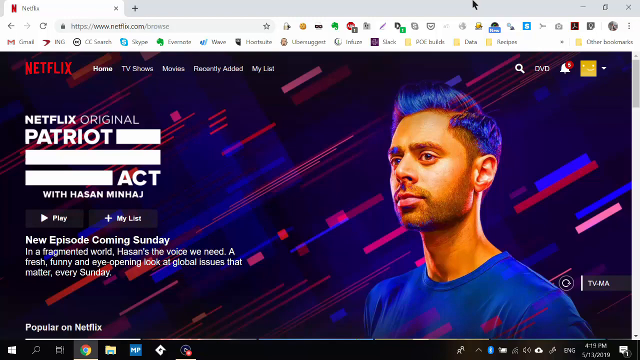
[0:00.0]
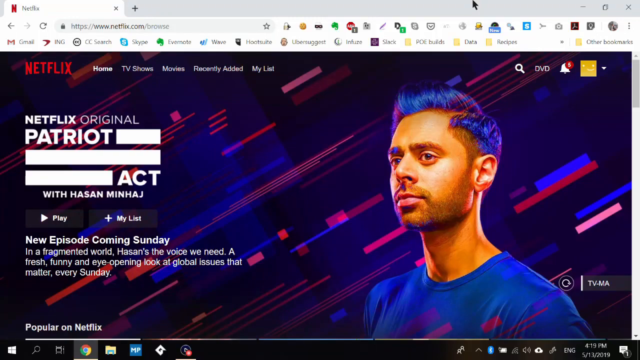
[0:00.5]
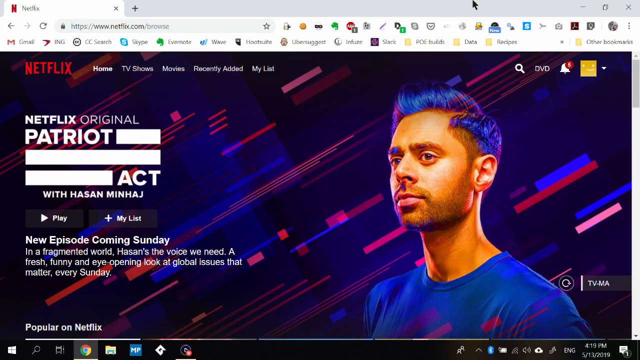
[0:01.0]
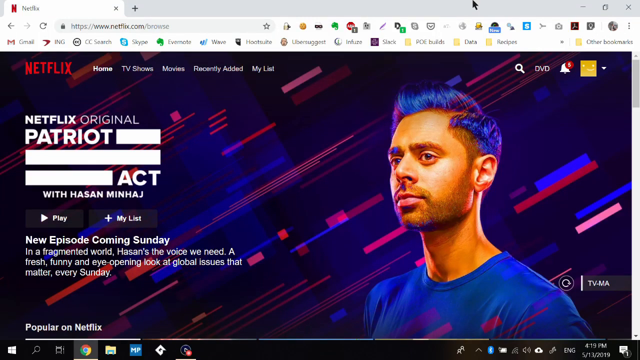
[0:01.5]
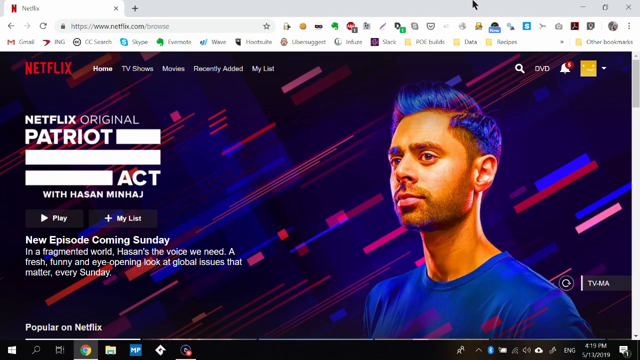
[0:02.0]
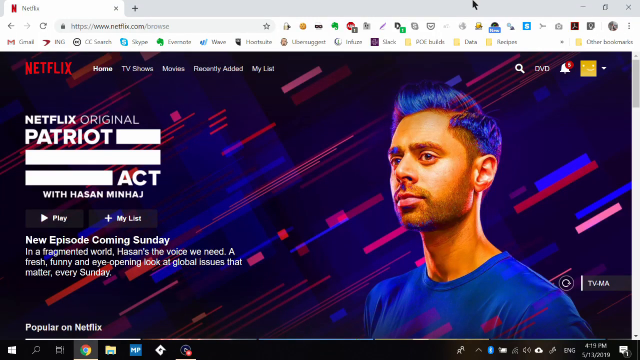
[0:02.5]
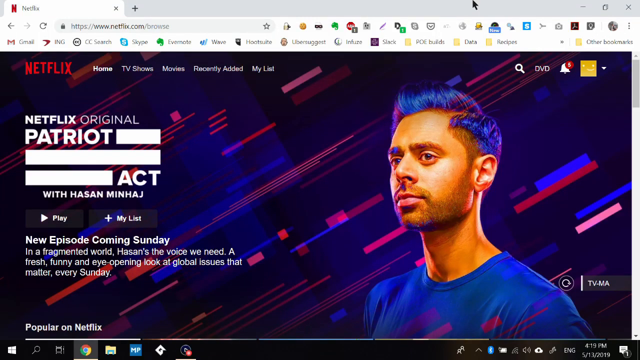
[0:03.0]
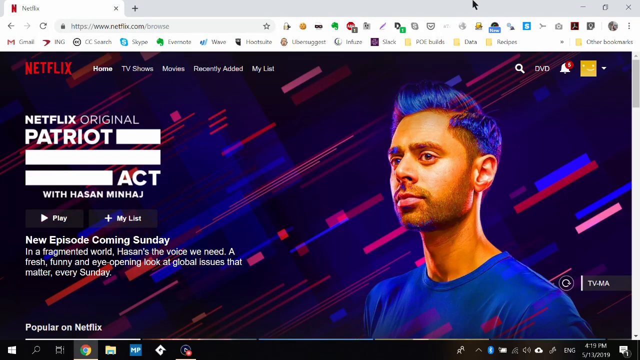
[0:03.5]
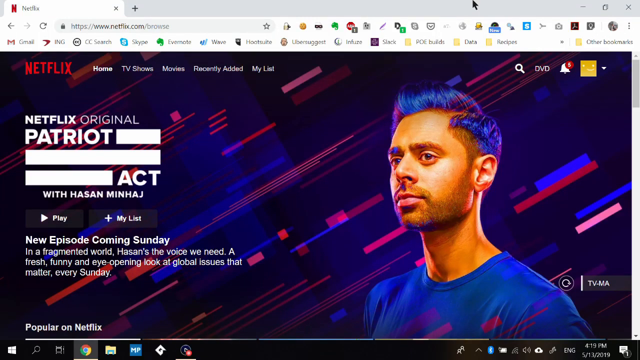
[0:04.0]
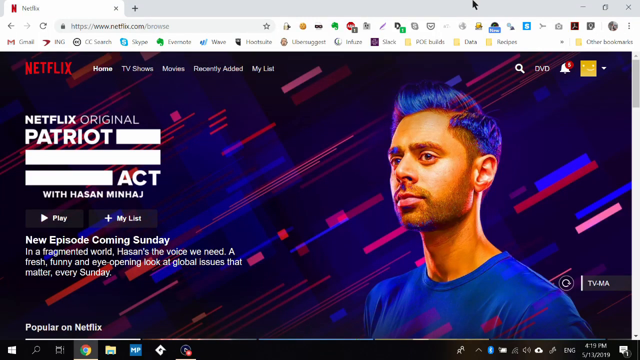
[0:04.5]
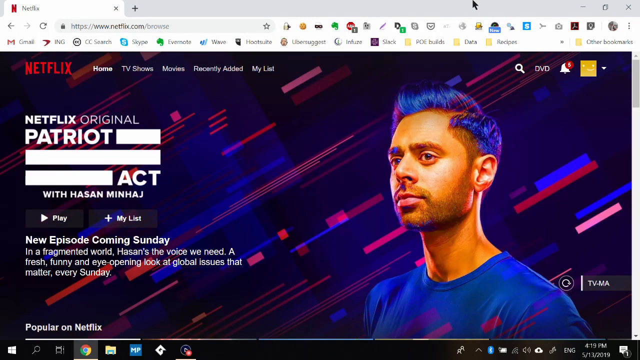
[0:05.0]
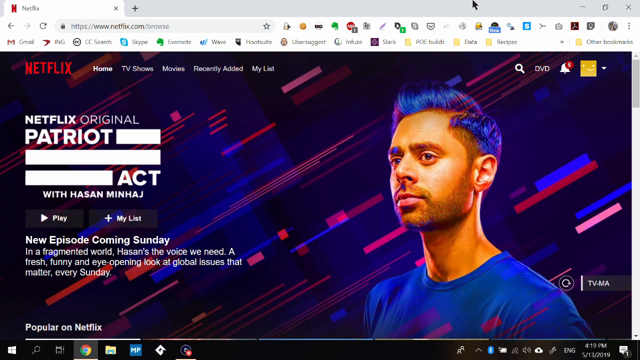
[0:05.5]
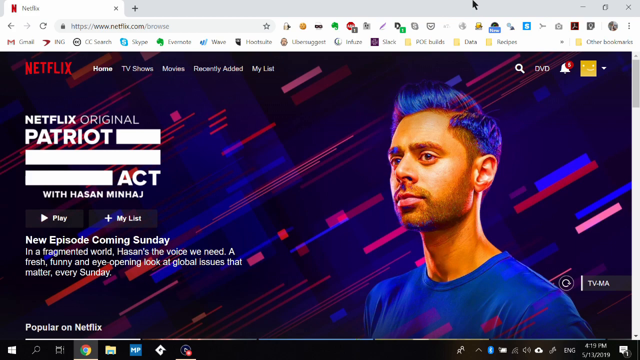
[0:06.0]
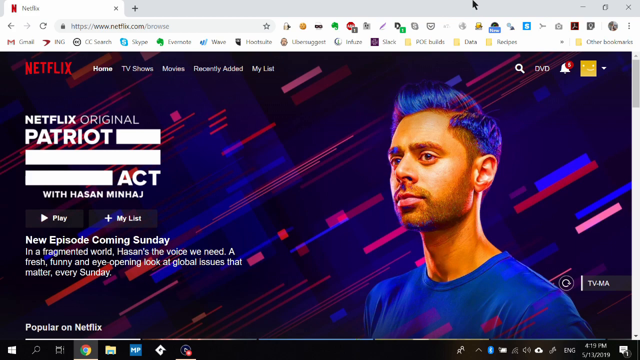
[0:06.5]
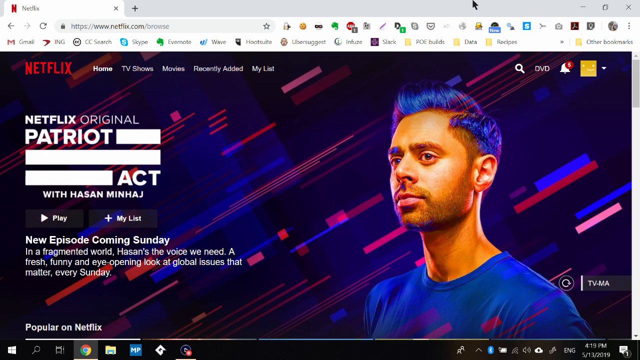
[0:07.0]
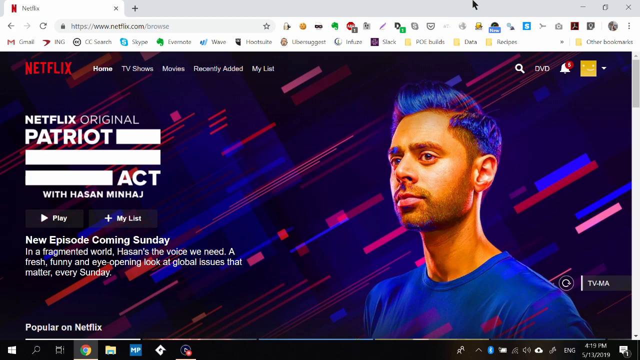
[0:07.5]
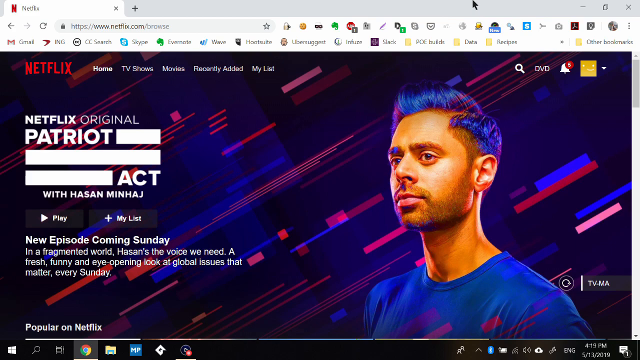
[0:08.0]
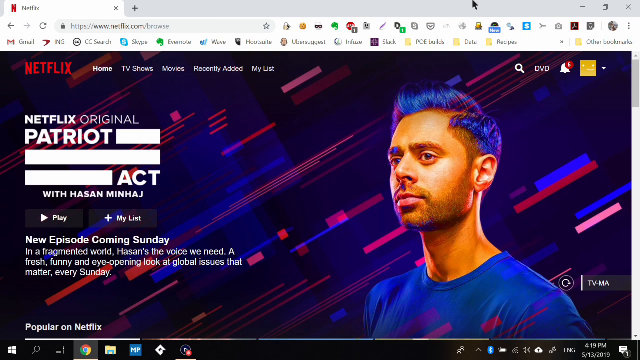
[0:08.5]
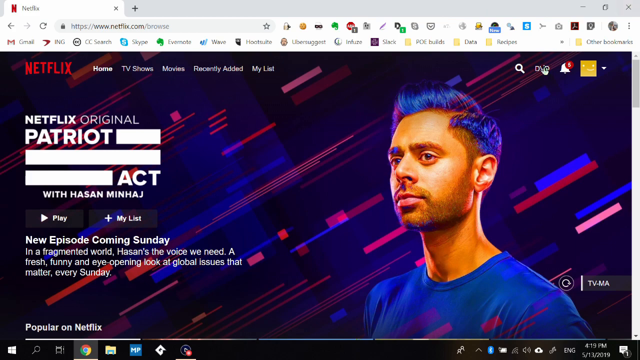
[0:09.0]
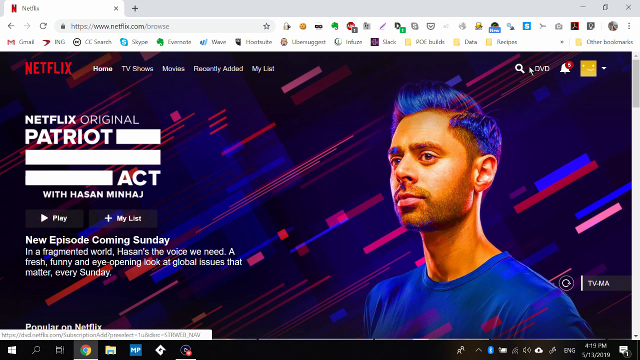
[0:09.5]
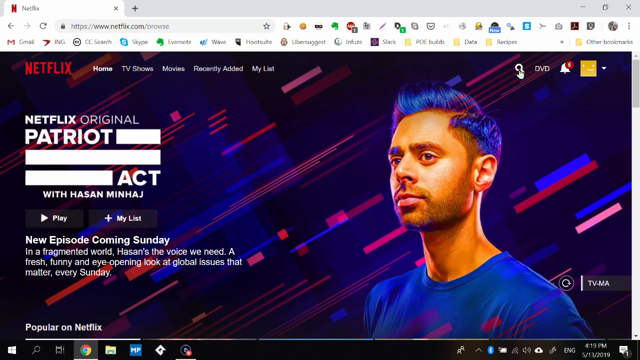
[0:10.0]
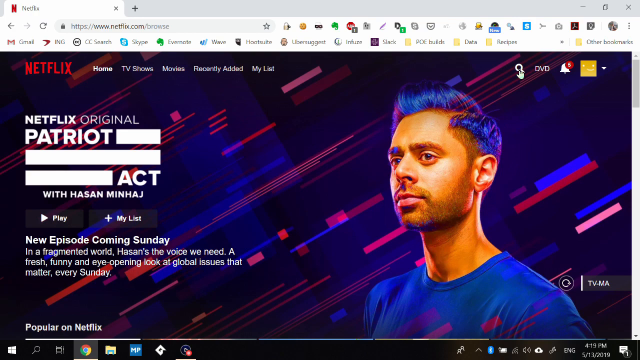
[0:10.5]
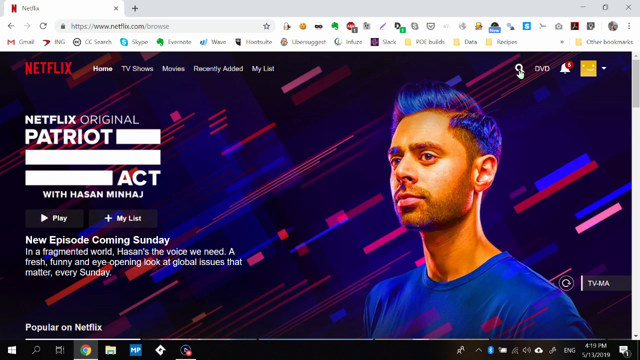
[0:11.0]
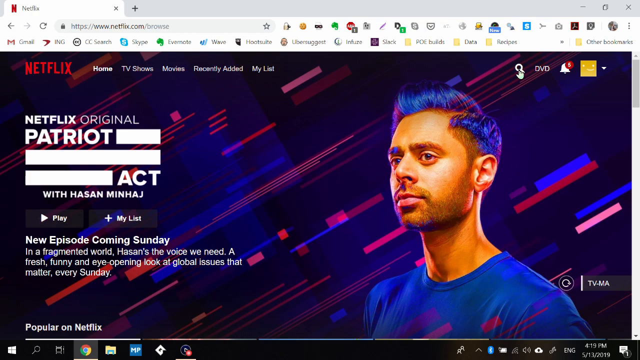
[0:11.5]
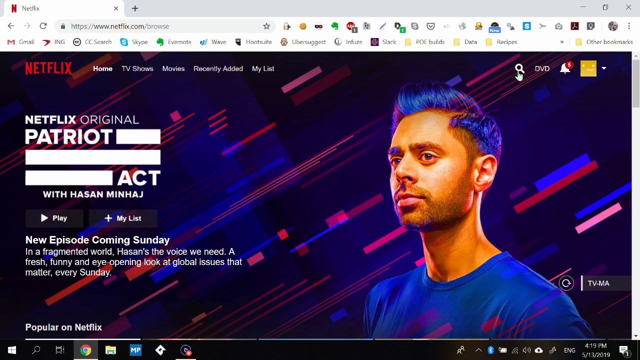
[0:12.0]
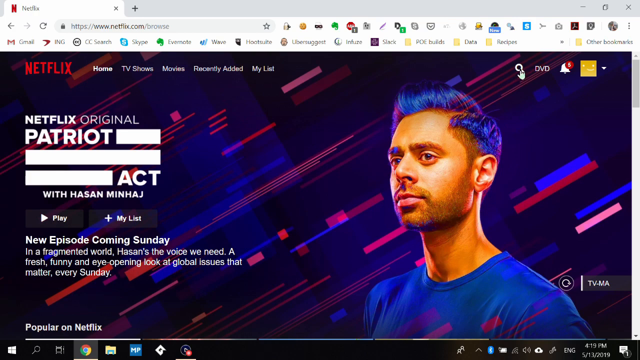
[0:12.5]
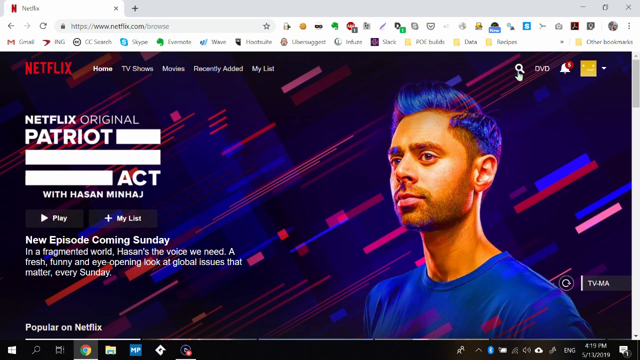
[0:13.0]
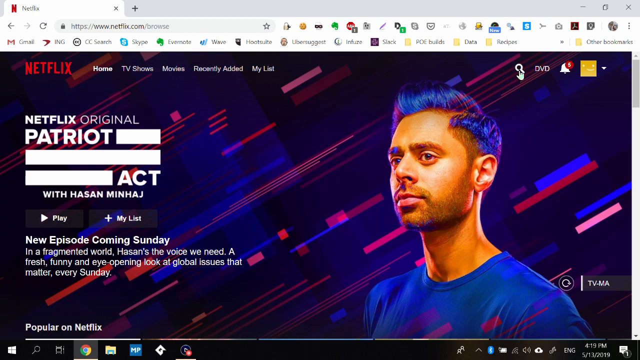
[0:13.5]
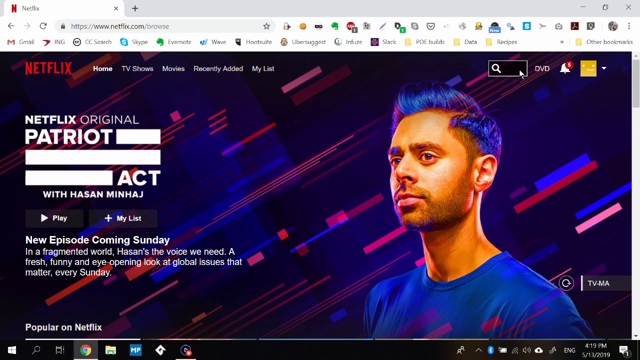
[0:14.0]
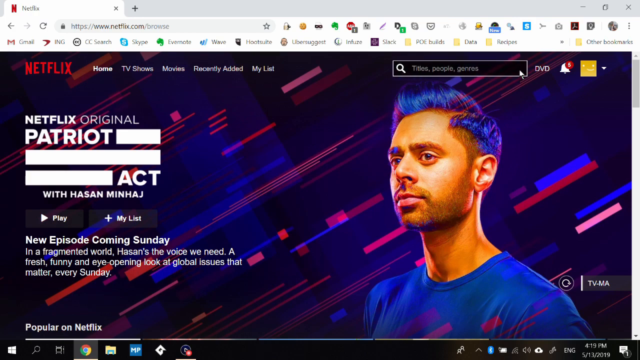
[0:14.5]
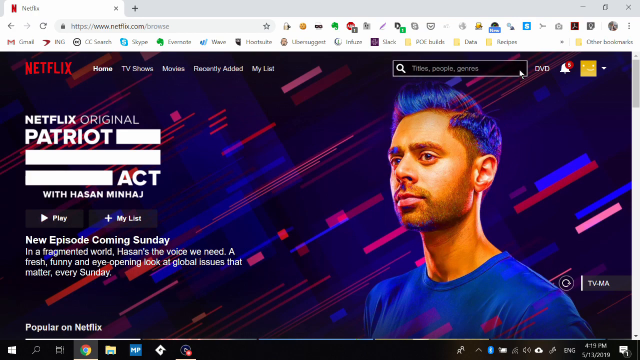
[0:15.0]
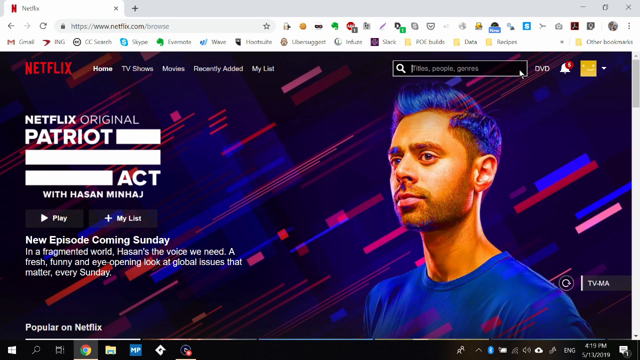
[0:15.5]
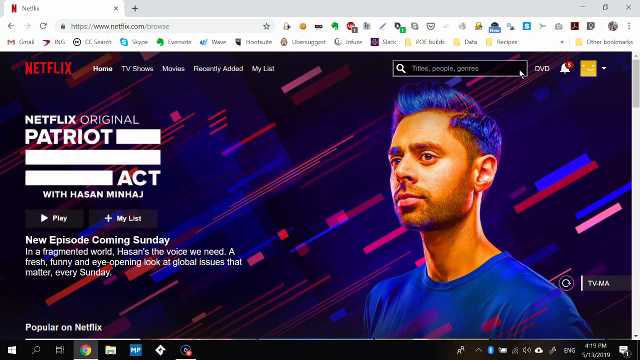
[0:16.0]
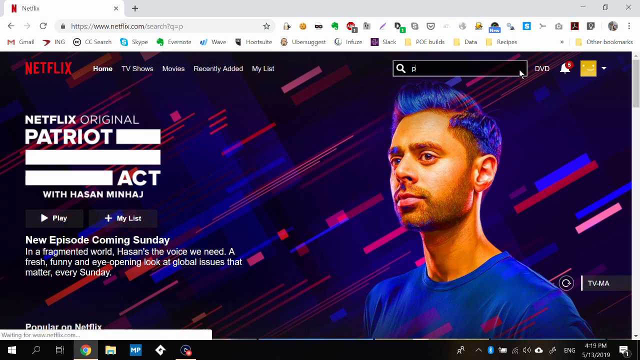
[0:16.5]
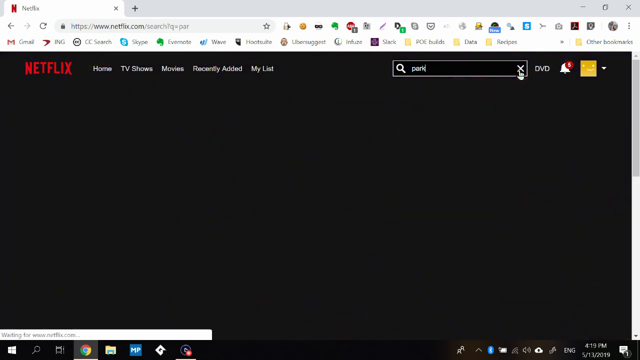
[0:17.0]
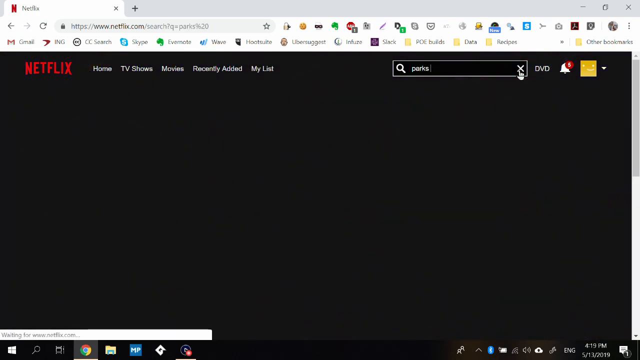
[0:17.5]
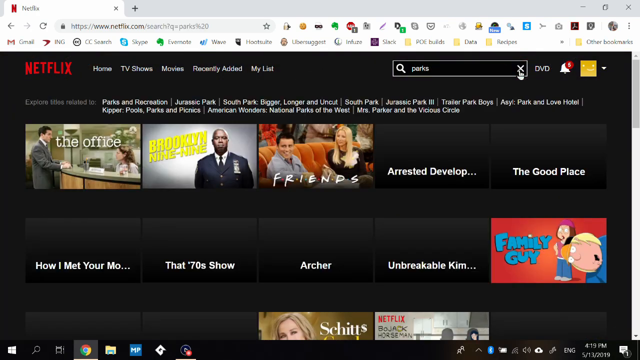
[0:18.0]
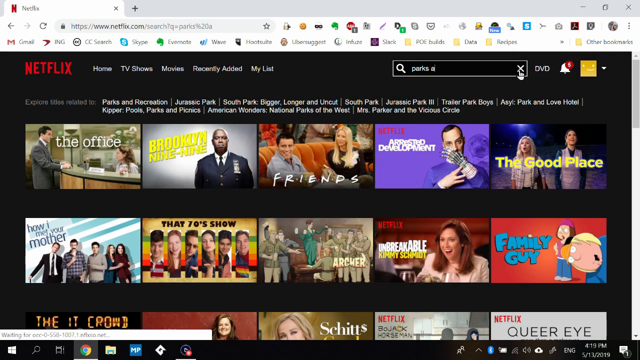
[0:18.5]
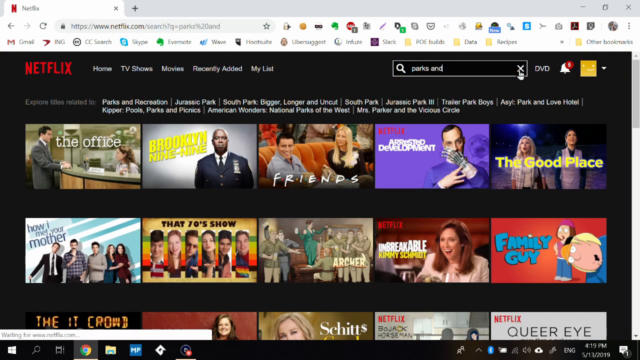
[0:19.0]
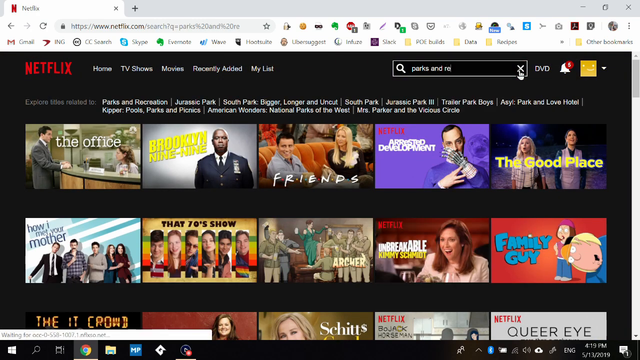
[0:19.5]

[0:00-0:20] A Netflix homepage appears, featuring a man who seems to be about 27 years old. The page shows menu options including home, TV shows, movies and recently added. A Netflix original is featured, with an episode of a show apparently called Hasani Minihaj, and a new episode is shown as coming Sunday. The mouse cursor moves to the search icon and clicks it.